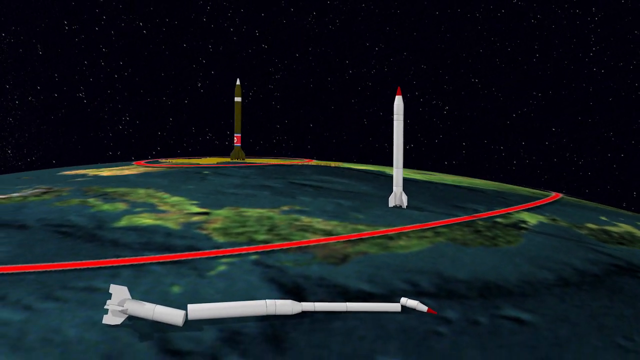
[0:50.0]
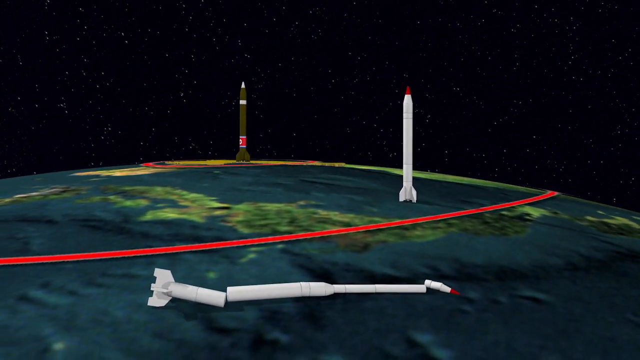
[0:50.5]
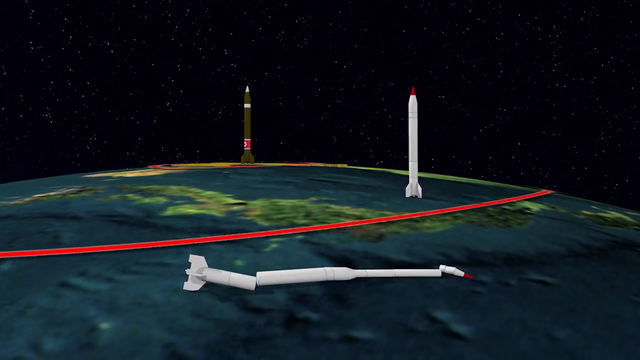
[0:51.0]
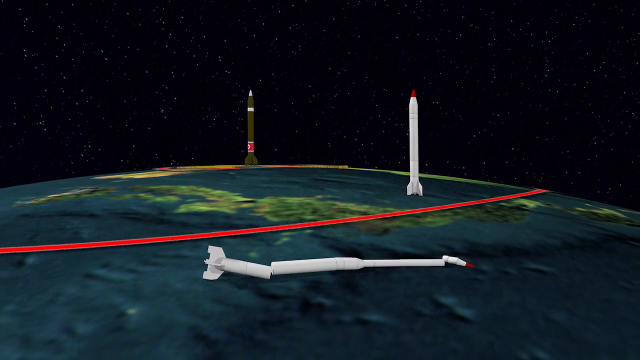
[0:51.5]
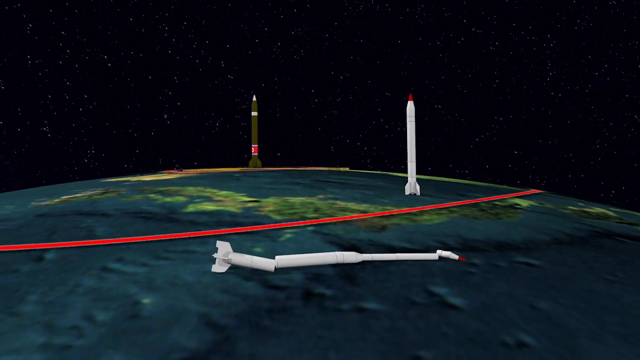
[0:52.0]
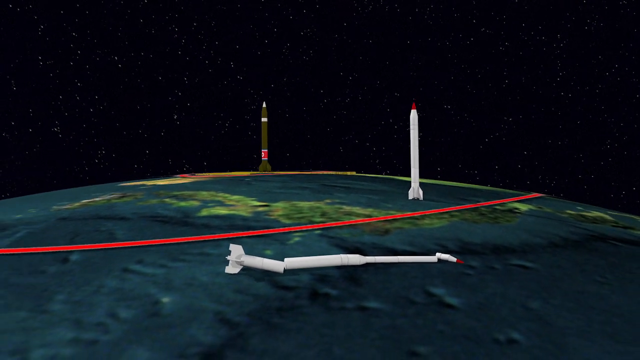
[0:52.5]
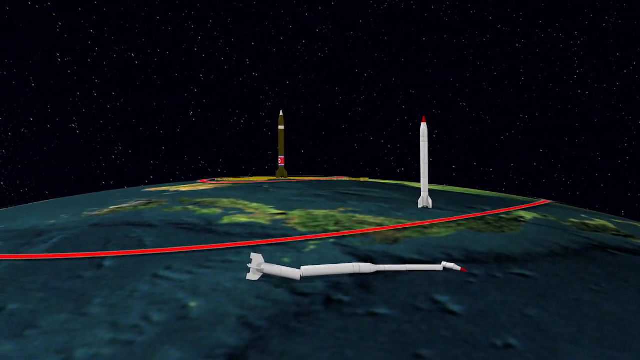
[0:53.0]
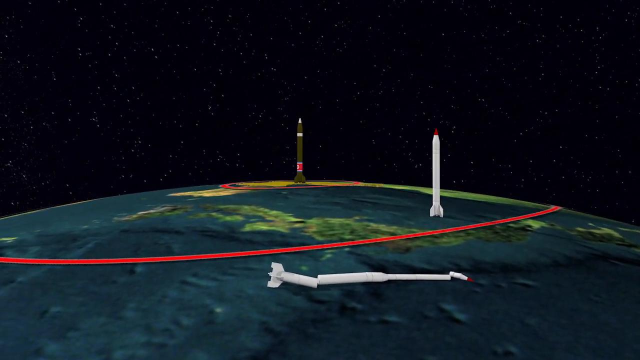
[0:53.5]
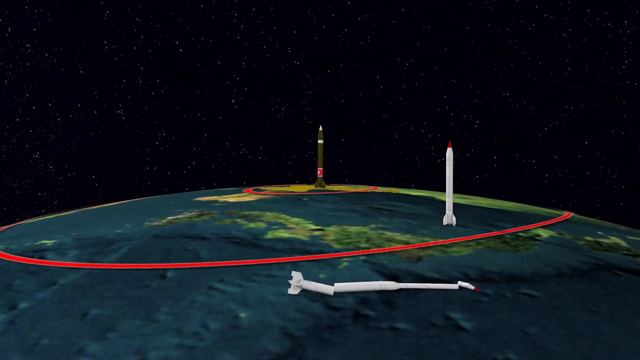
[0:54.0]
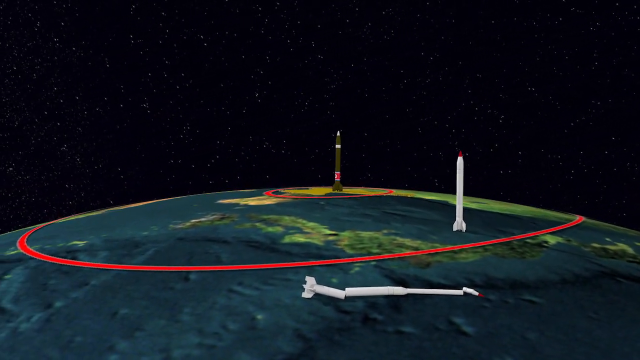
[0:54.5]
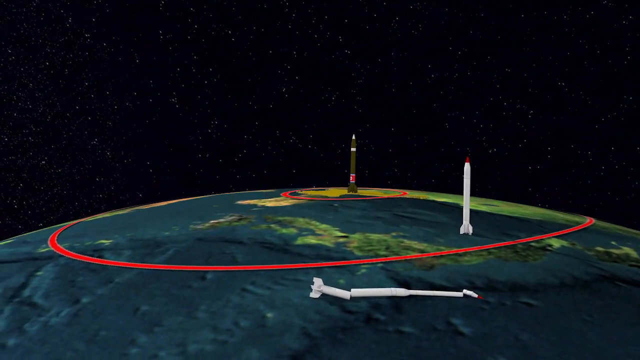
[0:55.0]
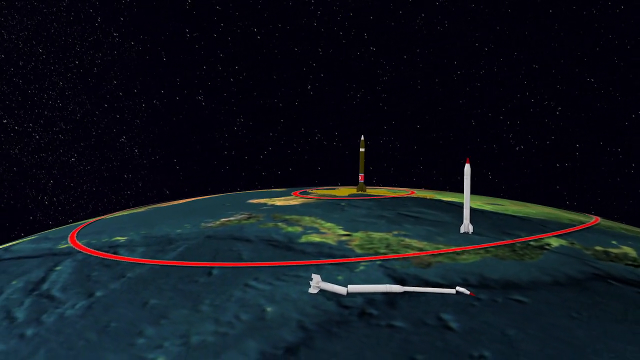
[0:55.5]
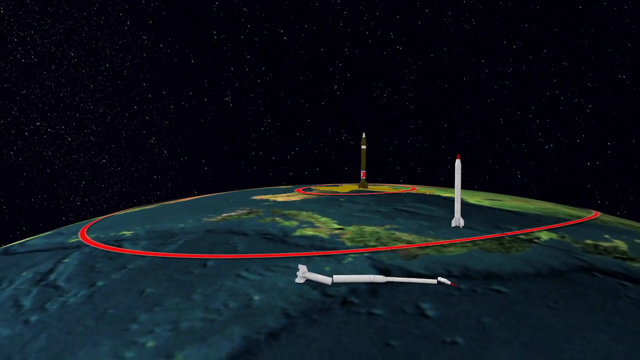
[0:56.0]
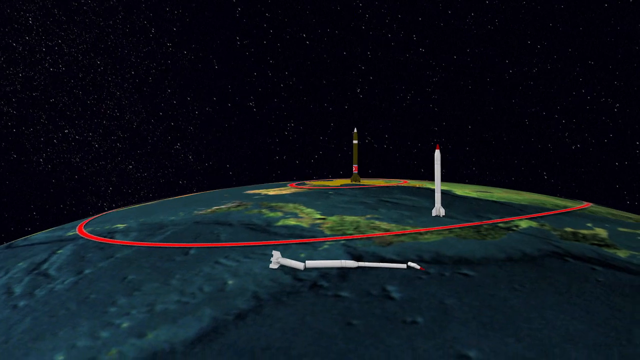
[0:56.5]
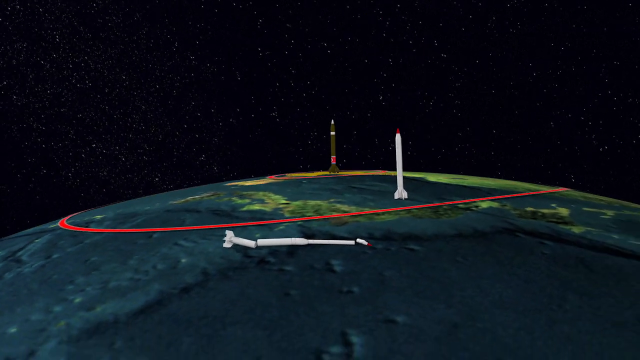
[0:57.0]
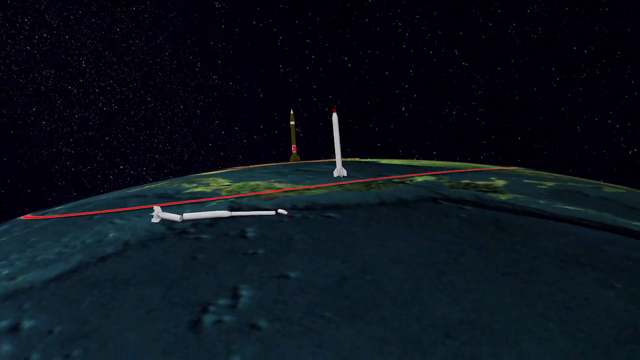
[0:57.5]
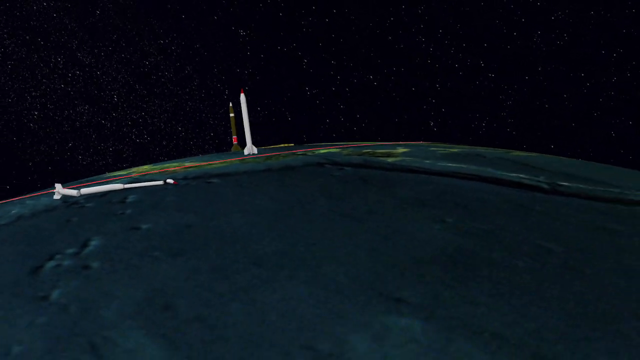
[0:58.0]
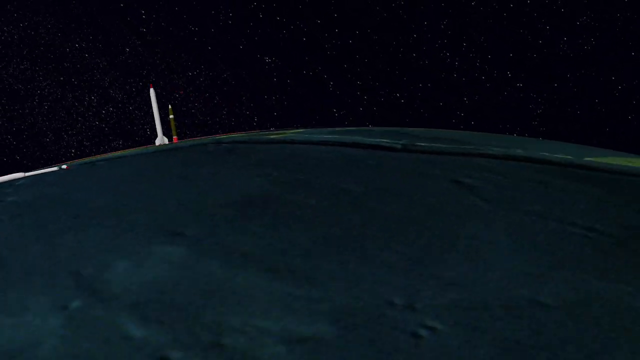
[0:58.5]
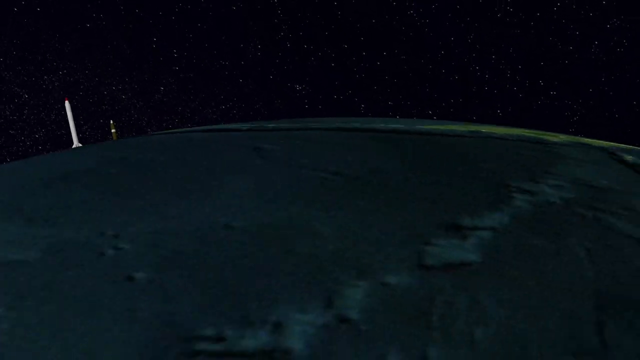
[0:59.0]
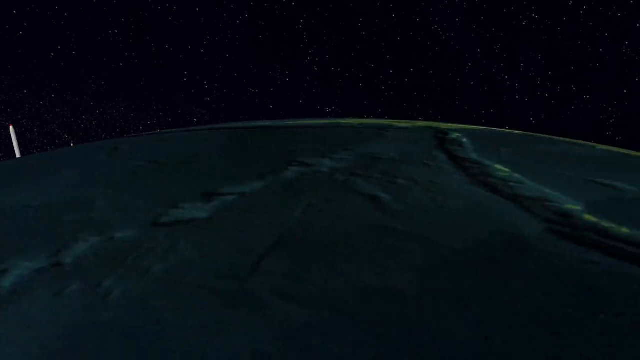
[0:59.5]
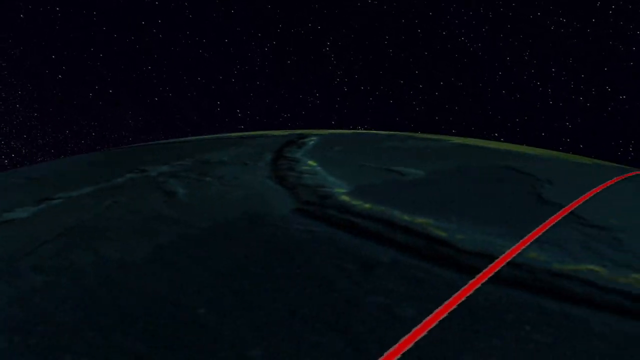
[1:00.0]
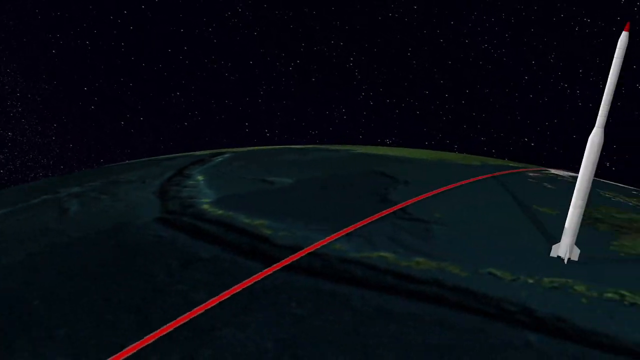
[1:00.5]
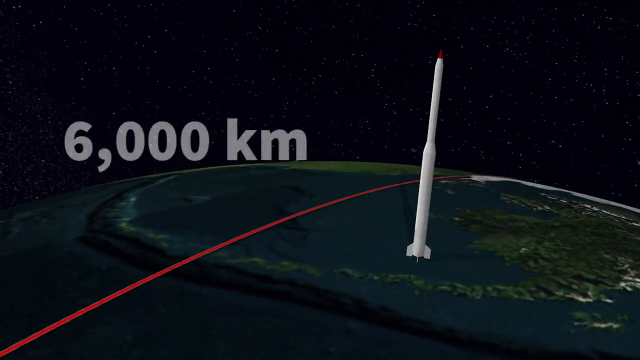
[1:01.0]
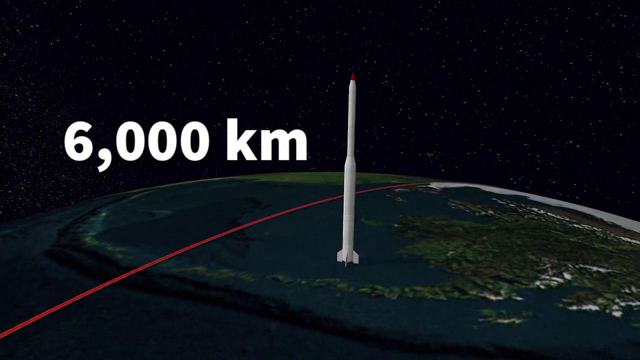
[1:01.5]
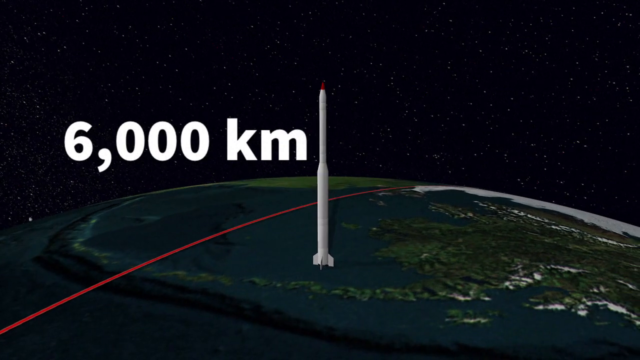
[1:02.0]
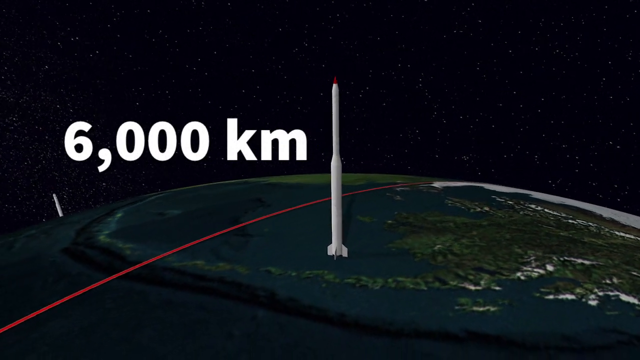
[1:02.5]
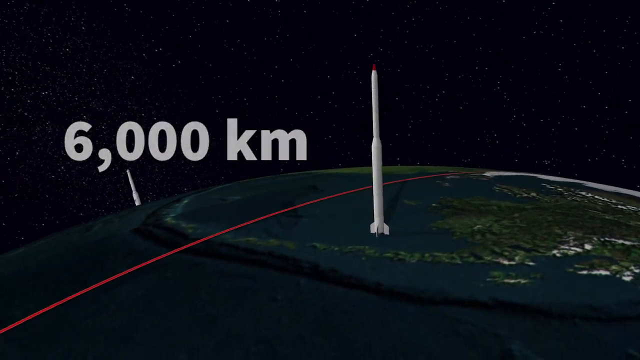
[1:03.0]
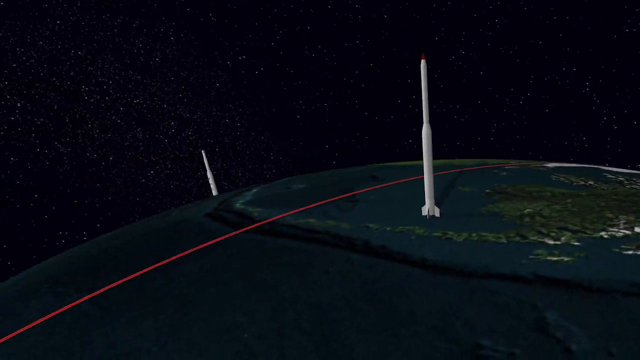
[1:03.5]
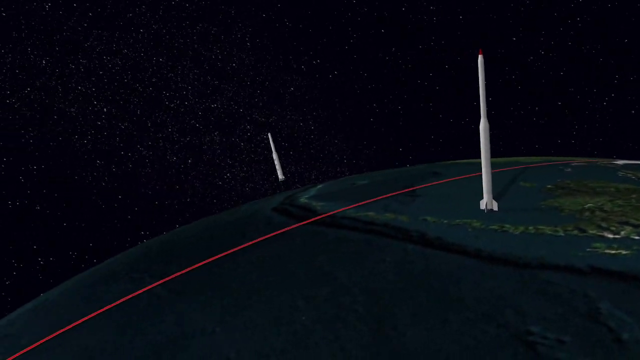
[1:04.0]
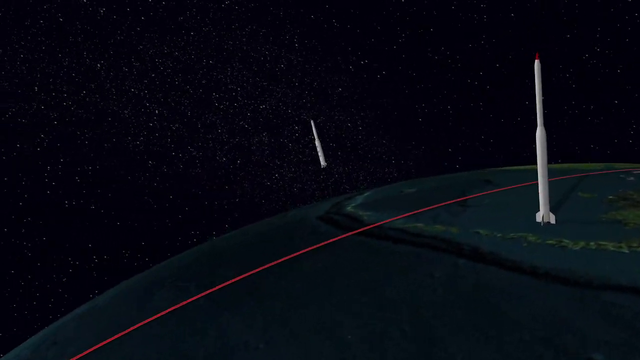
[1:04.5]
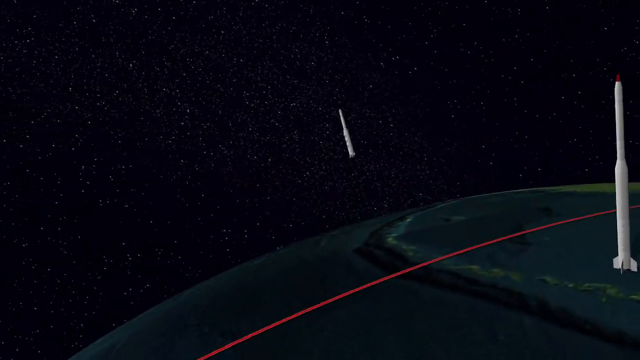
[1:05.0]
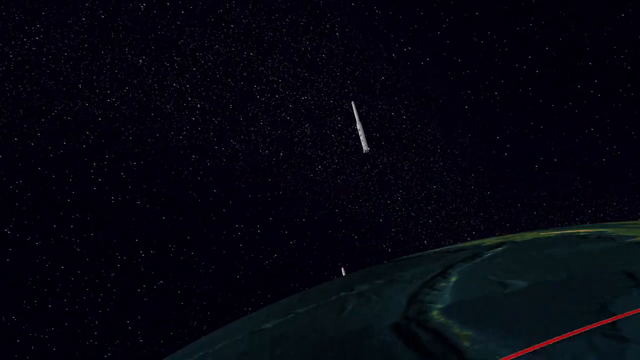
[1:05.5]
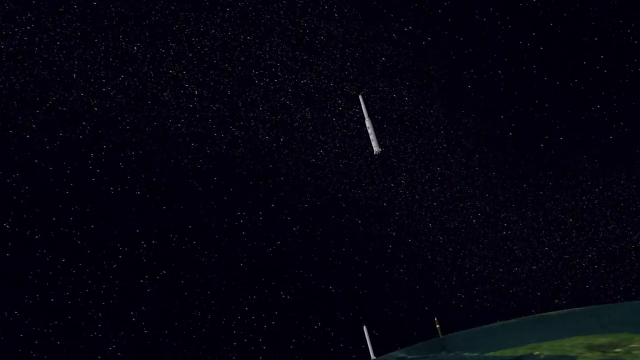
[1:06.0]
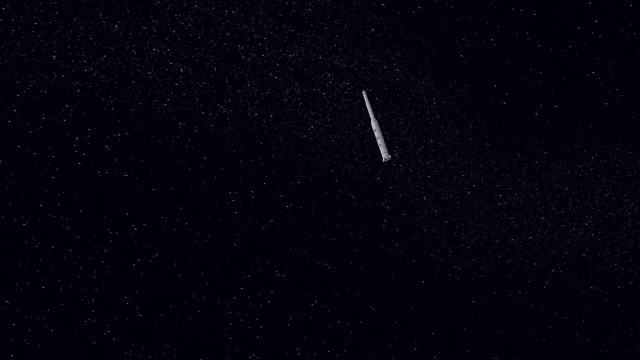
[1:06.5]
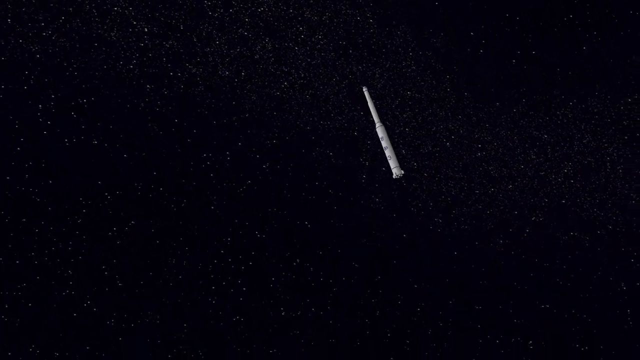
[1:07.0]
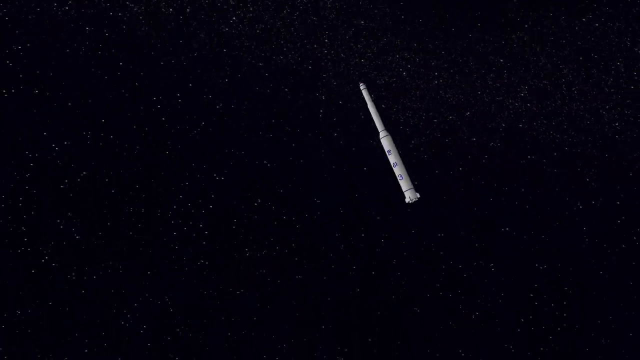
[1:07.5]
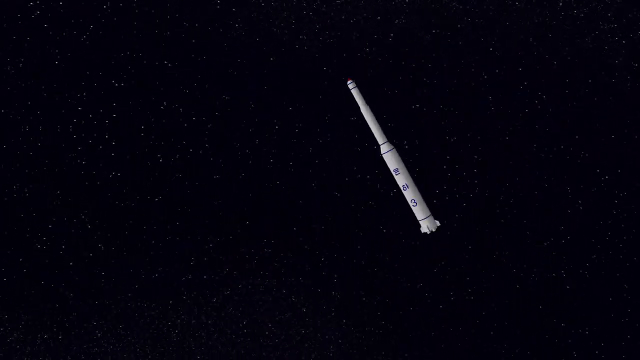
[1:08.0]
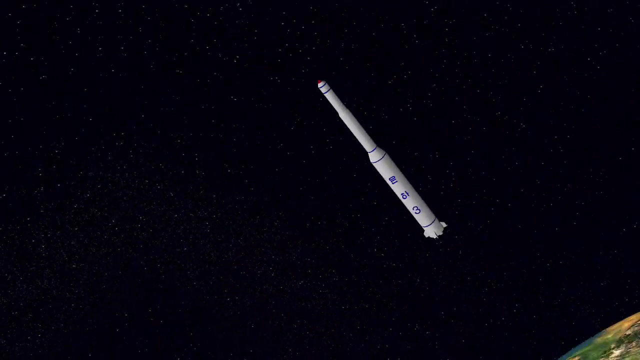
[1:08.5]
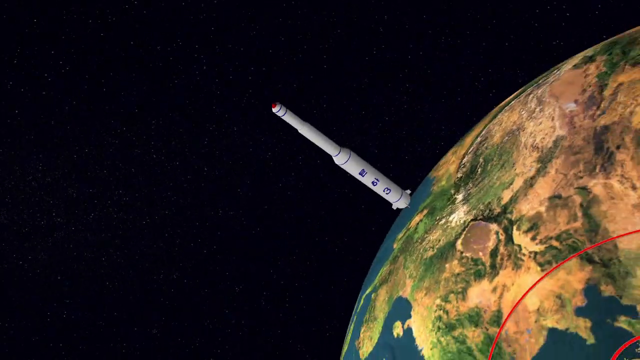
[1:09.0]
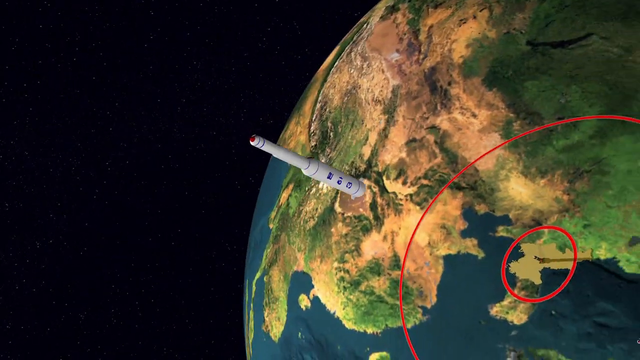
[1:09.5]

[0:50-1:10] An M appears in different colors: silver, black, green, and yellow.